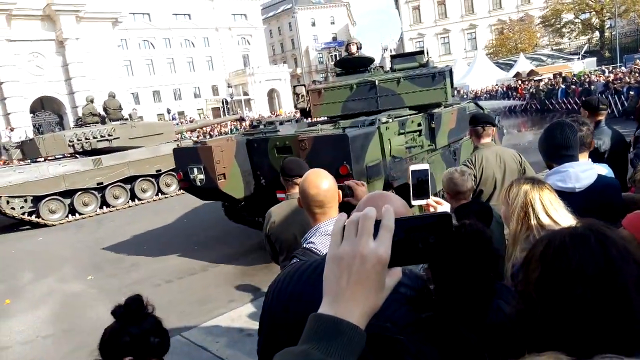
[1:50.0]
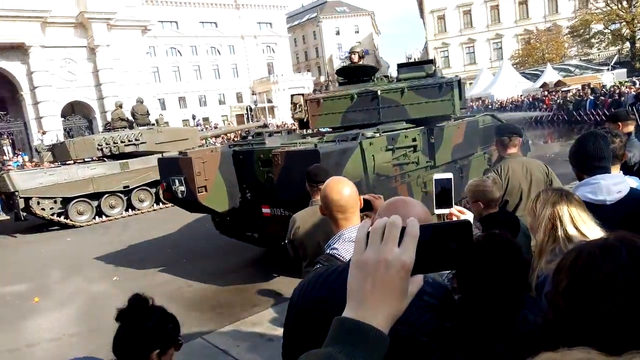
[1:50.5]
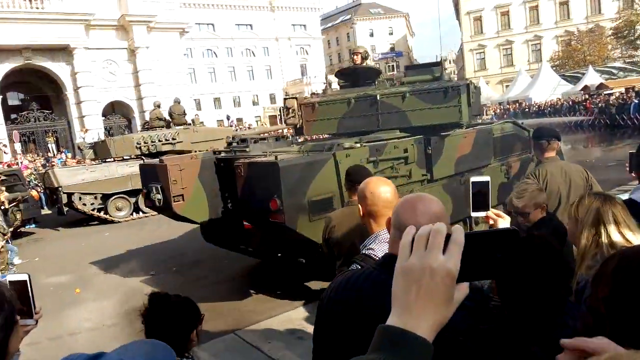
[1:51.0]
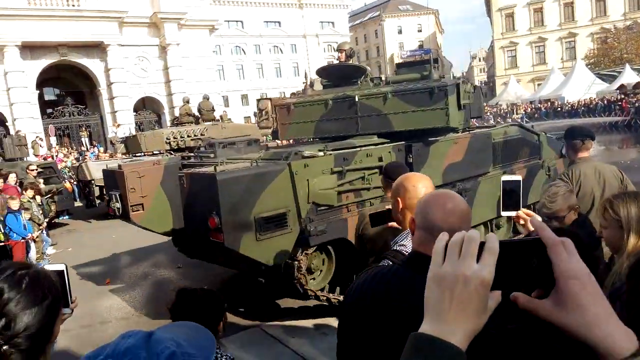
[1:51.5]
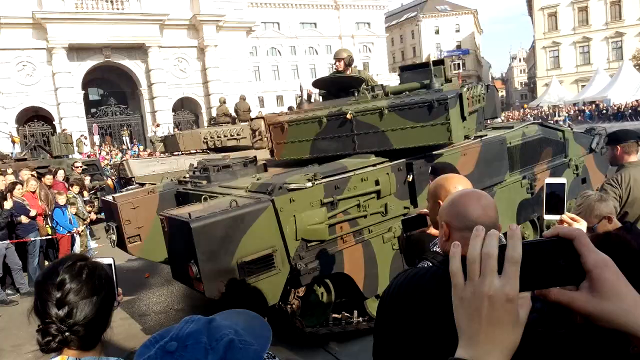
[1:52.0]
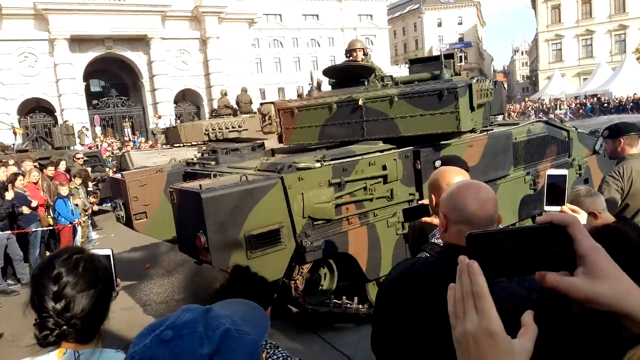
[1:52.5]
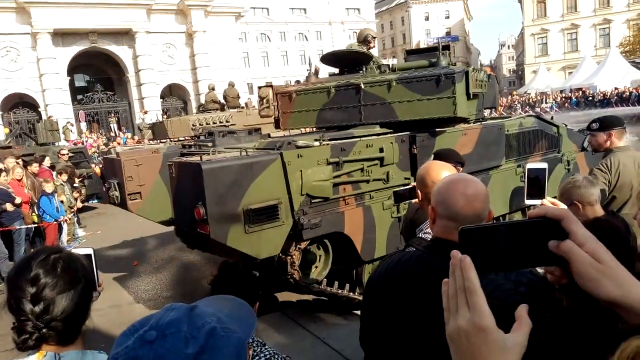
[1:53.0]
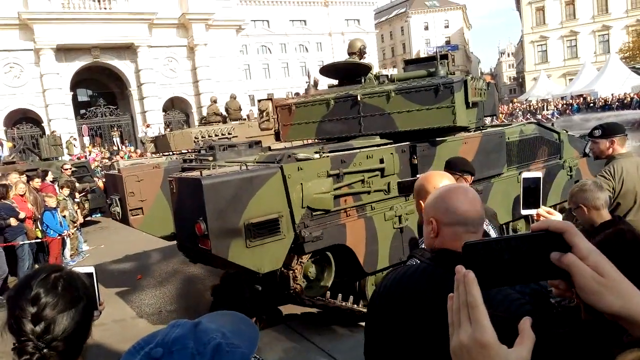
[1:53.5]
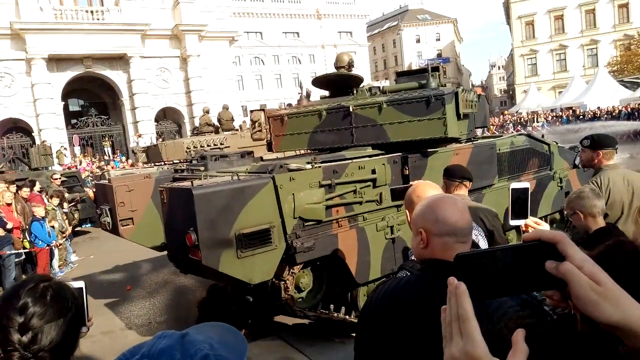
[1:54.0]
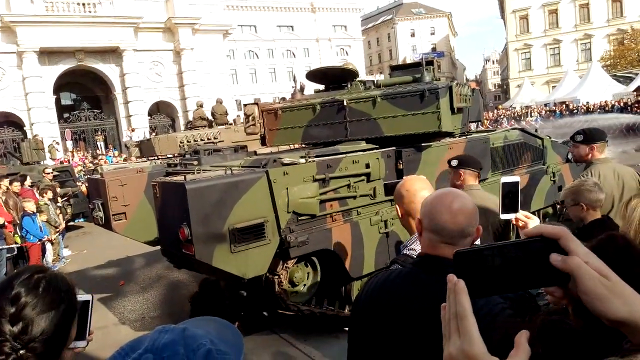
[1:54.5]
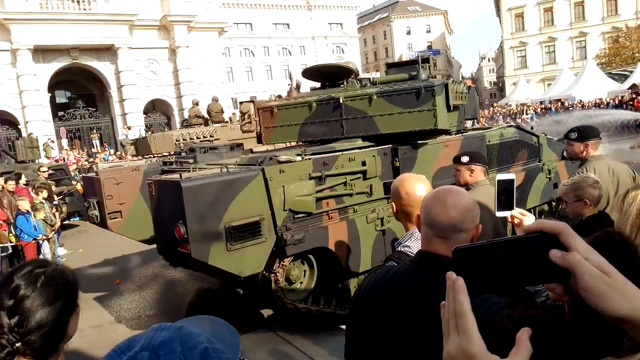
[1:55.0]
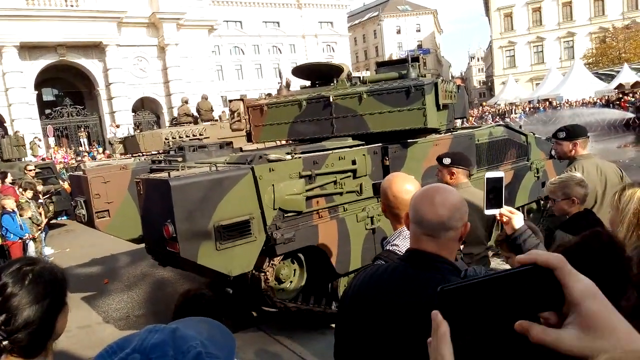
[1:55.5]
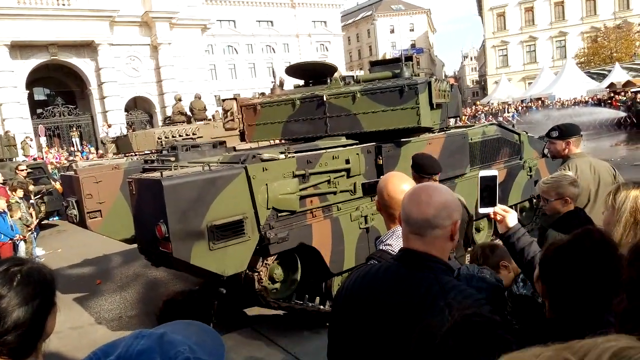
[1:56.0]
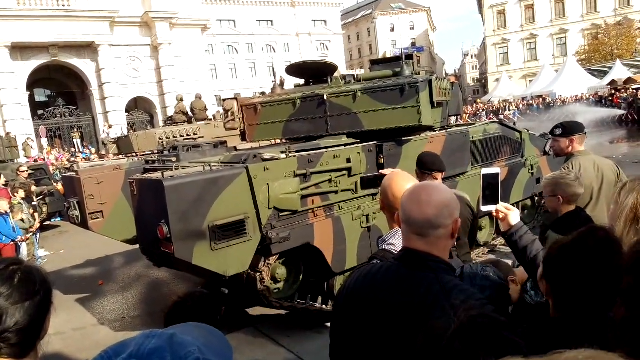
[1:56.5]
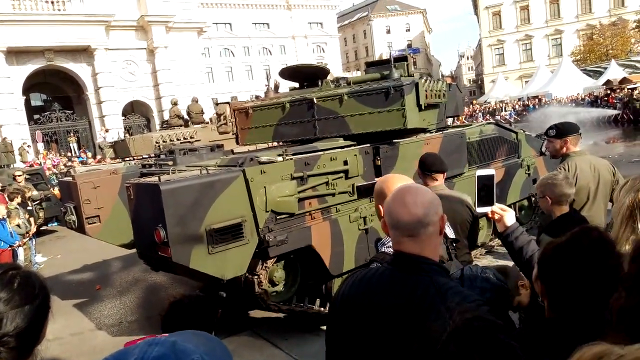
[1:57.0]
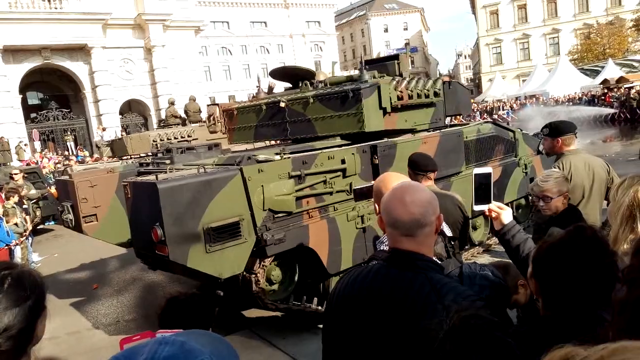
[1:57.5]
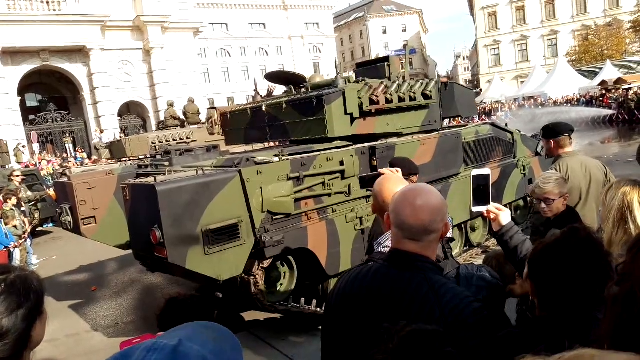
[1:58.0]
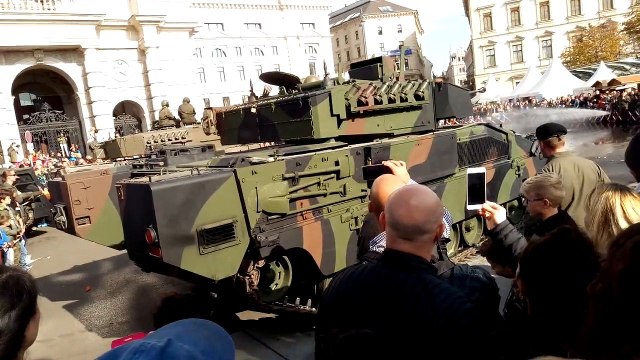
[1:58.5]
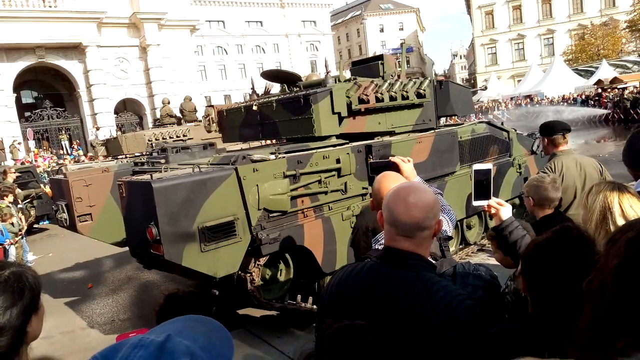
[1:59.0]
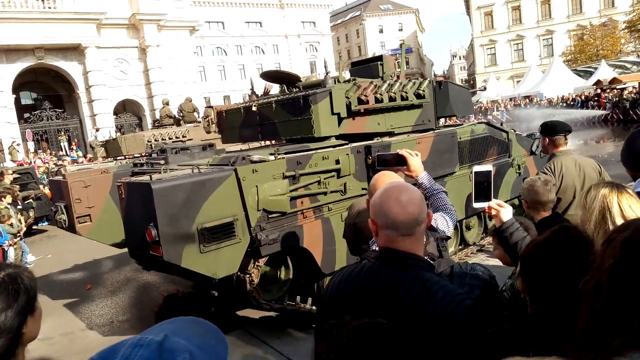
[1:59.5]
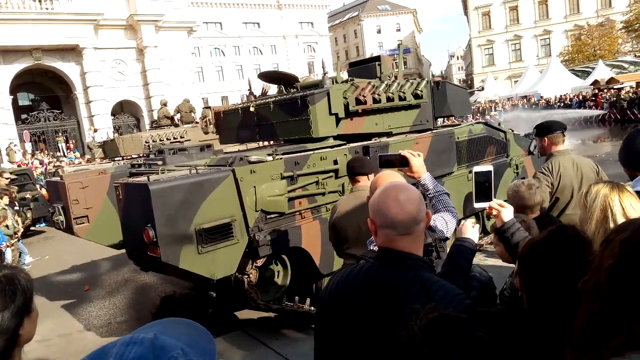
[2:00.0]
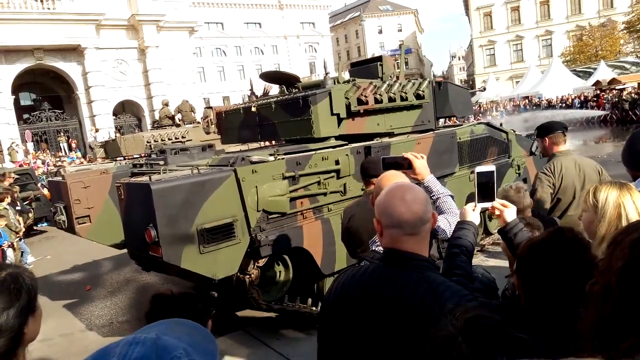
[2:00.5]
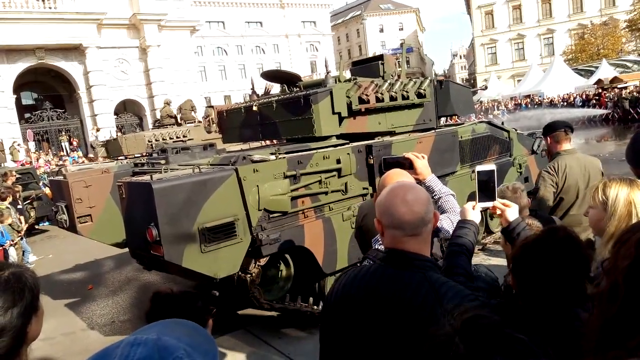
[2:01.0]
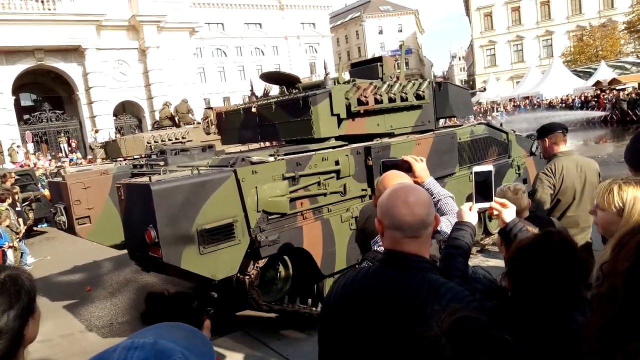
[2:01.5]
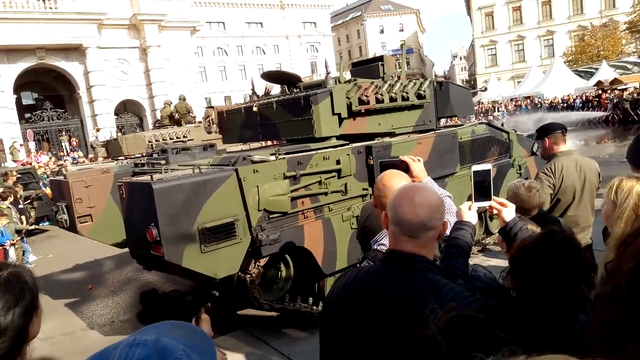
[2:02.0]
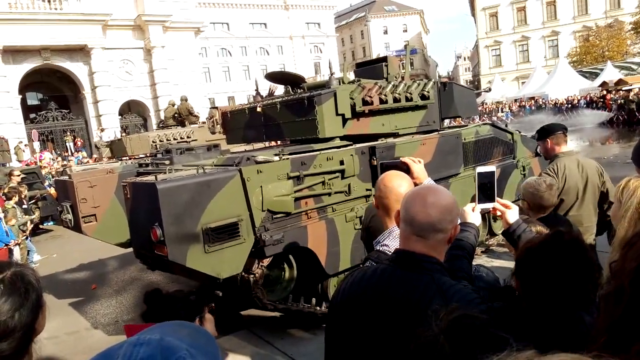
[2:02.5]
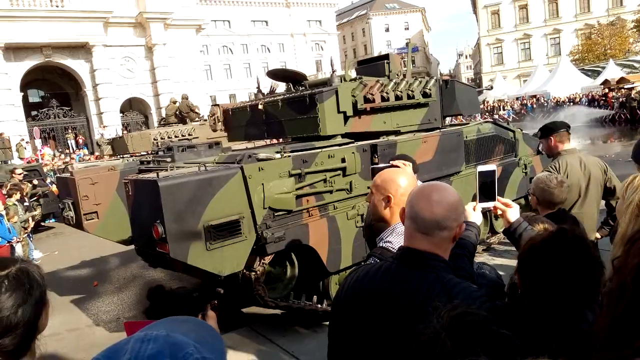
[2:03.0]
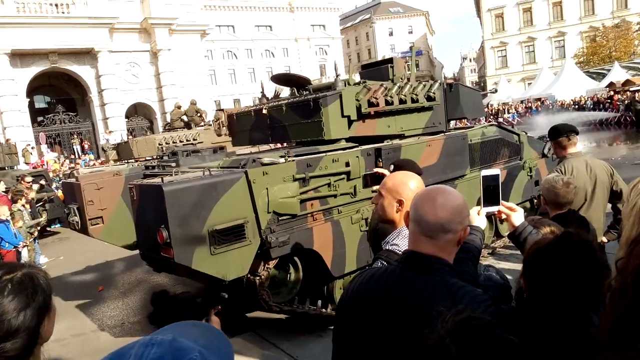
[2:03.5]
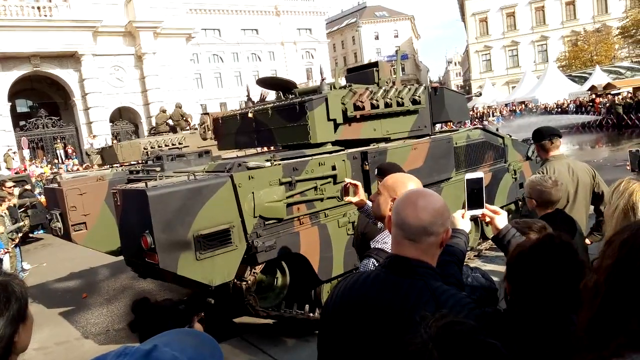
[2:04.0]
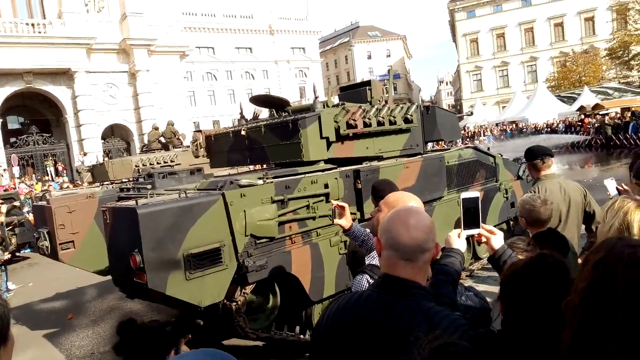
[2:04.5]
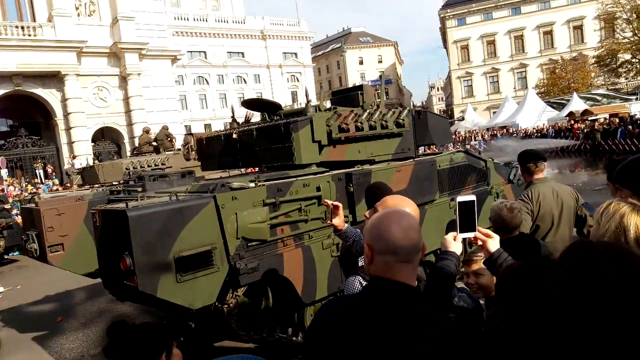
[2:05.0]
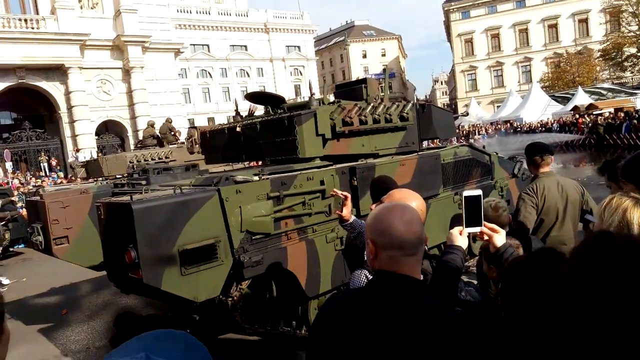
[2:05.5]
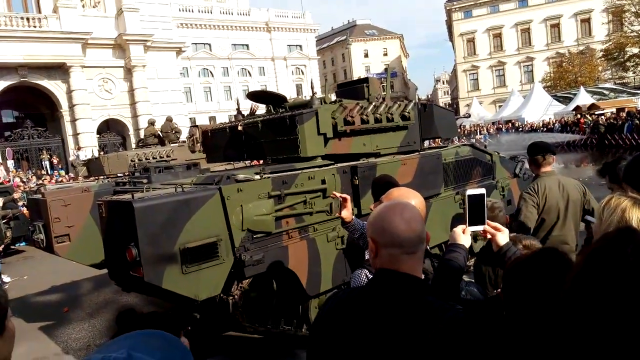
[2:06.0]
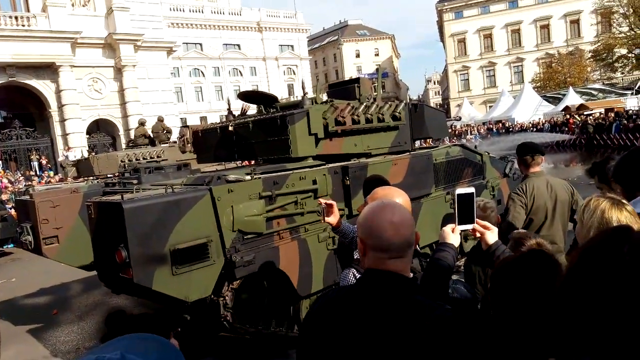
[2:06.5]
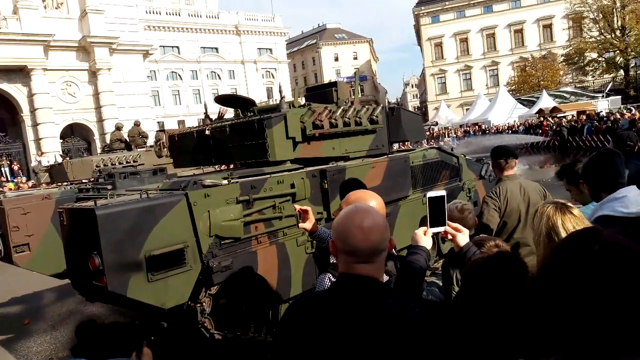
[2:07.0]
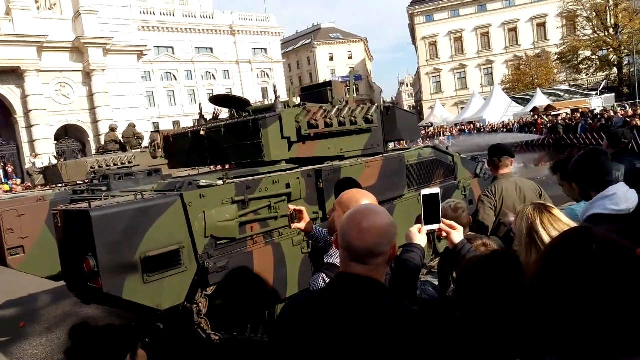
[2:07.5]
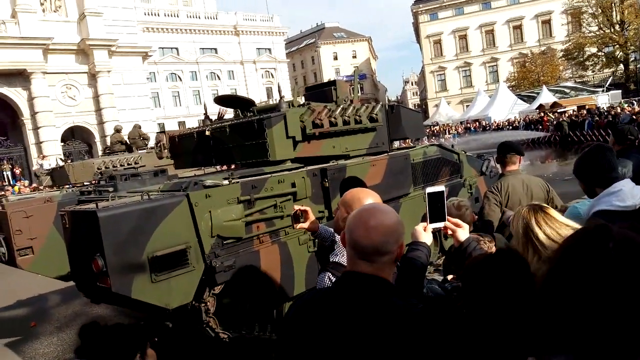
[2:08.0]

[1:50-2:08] The tank draws even closer and comes to a stop at the other end of the parade ground. The crowd at this end is different, and there appear to be some children watching, including a boy in a blue jacket and red trousers. The building behind is visible more closely and appears to be old, with an arched doorway with ornate gates. The tank is now very clear, its camouflage markings plainly visible. At its side there appears to be a shovel strapped on, along with a couple of other implements. When the tank stops and the brakes go on, it sort of bounces a little and lurches forward. The turret area appears to move round. Many people in the original crowd are still filming, and the marshalling soldiers in front of that crowd are seen more in side profile, wearing their black berets, which appear to have some insignia that is not clear enough to make out.